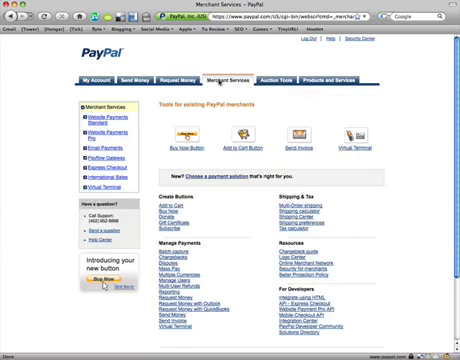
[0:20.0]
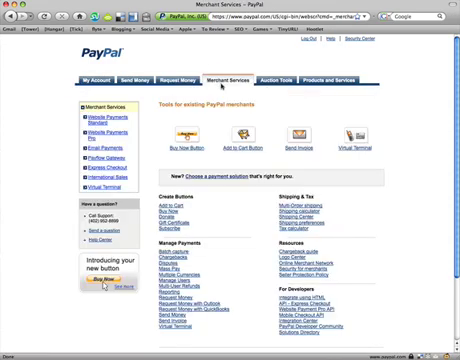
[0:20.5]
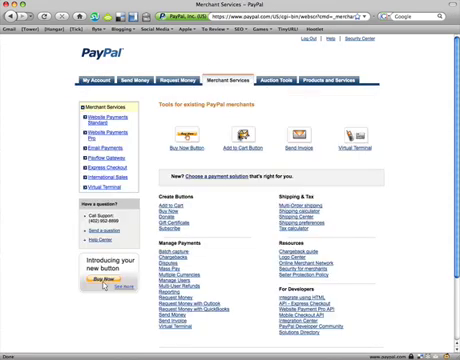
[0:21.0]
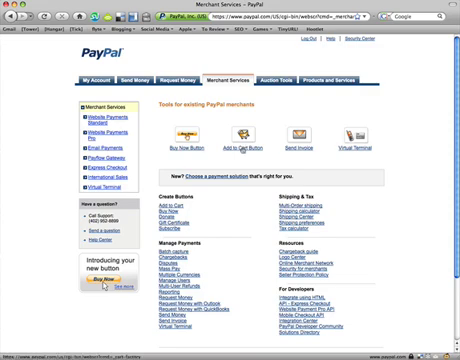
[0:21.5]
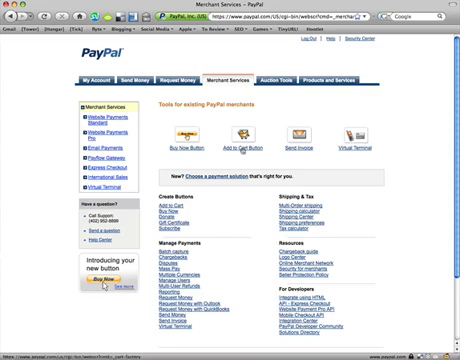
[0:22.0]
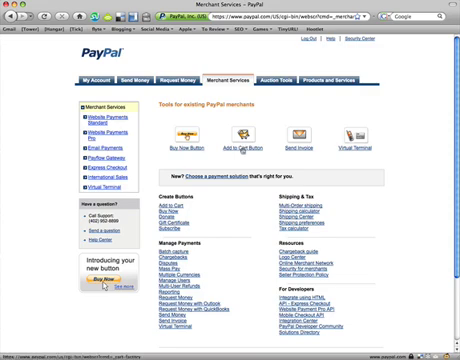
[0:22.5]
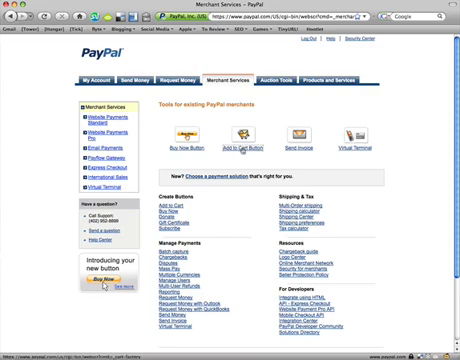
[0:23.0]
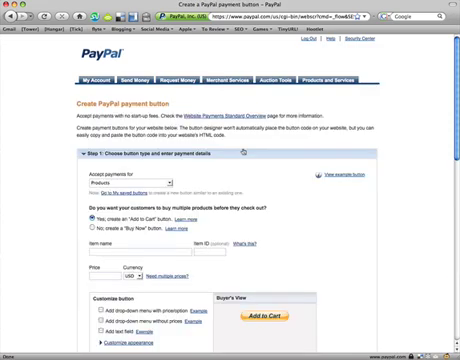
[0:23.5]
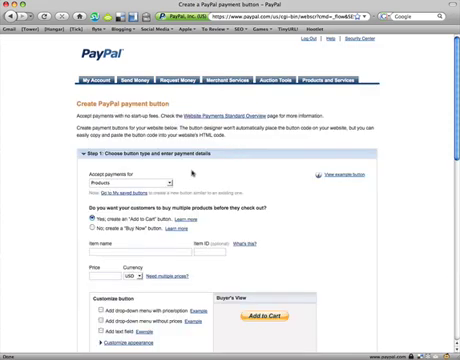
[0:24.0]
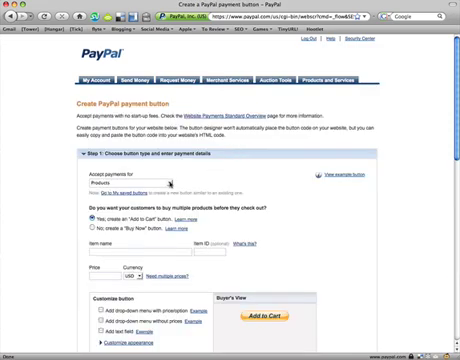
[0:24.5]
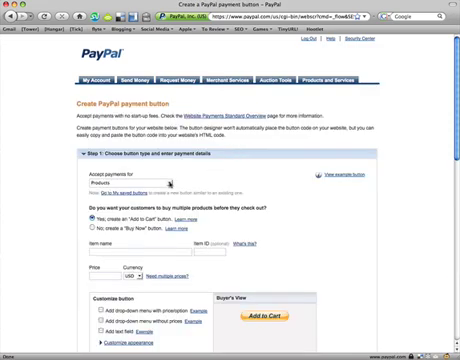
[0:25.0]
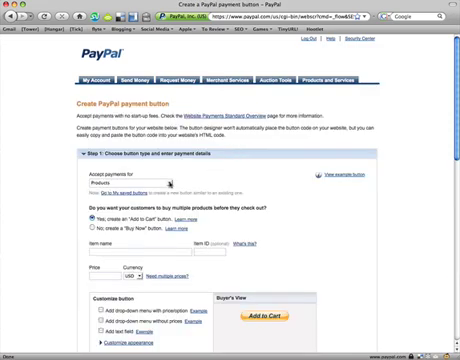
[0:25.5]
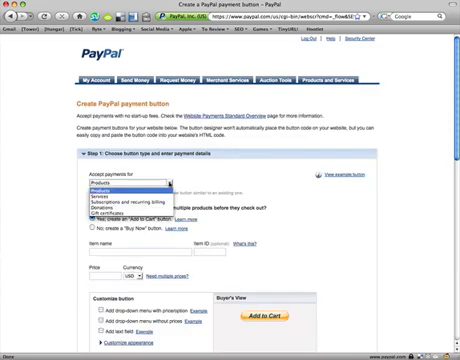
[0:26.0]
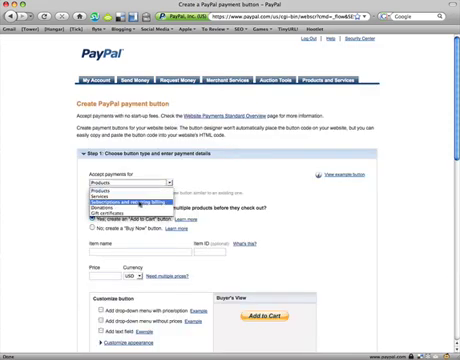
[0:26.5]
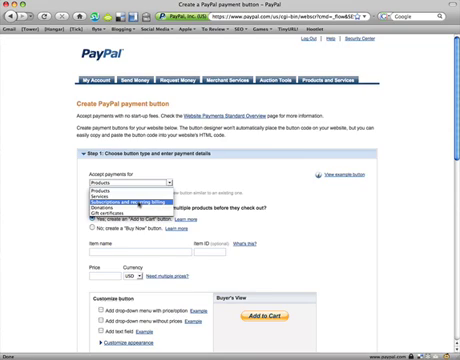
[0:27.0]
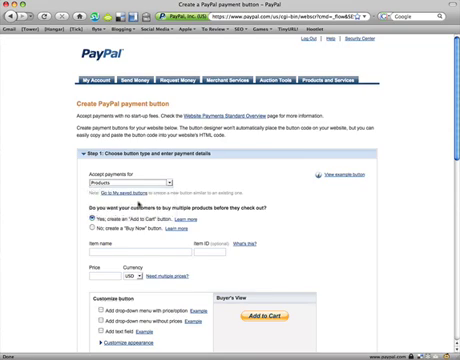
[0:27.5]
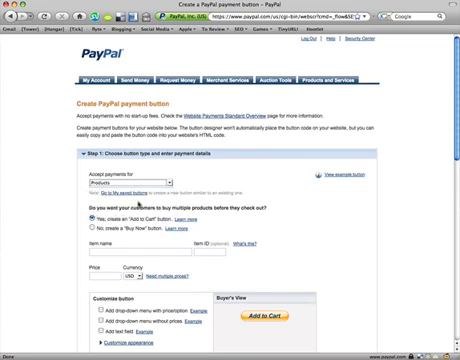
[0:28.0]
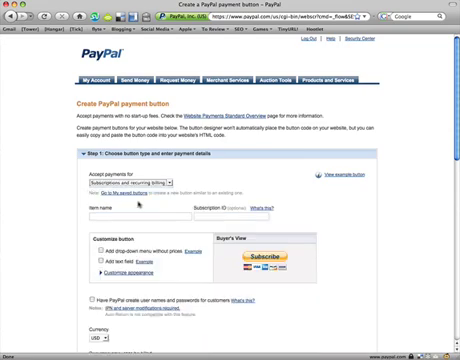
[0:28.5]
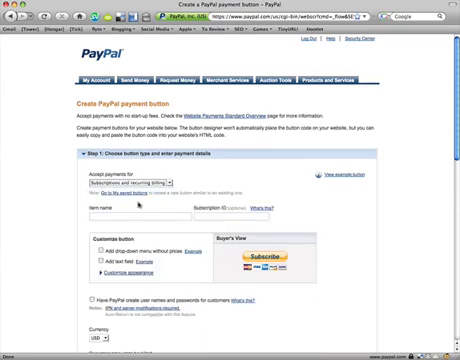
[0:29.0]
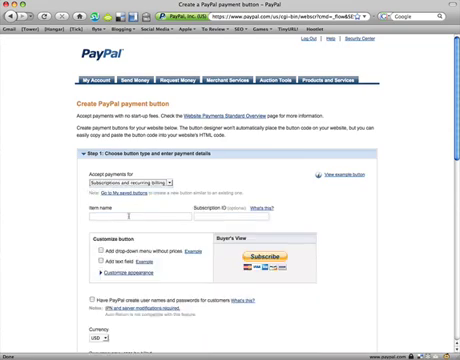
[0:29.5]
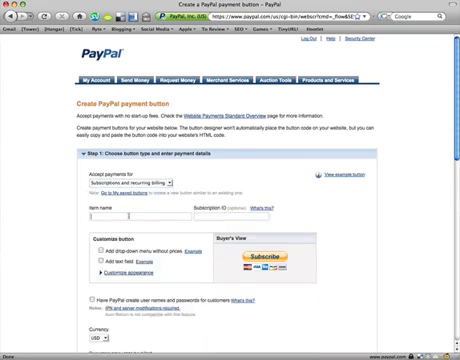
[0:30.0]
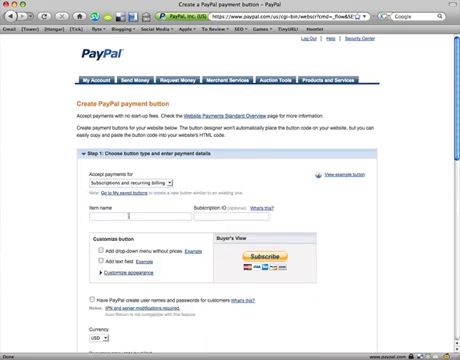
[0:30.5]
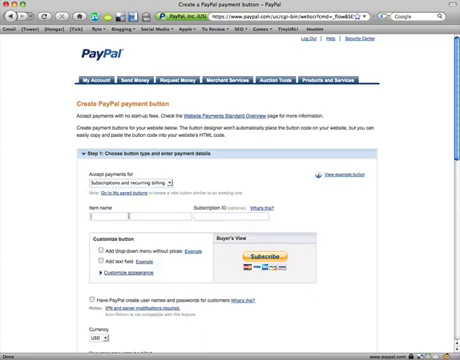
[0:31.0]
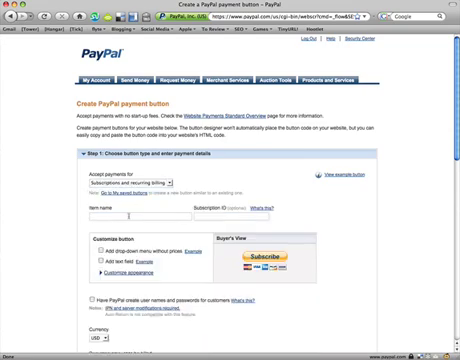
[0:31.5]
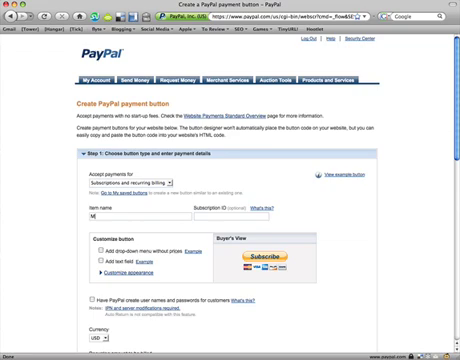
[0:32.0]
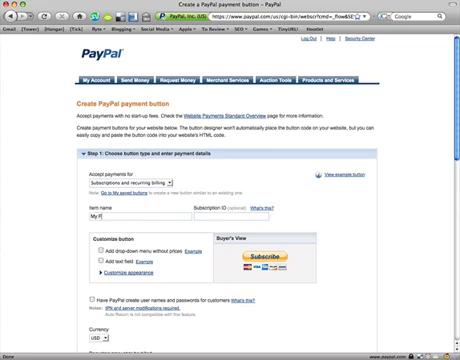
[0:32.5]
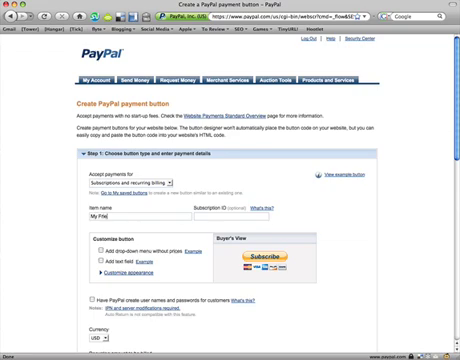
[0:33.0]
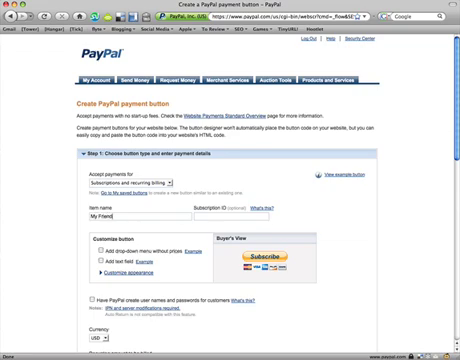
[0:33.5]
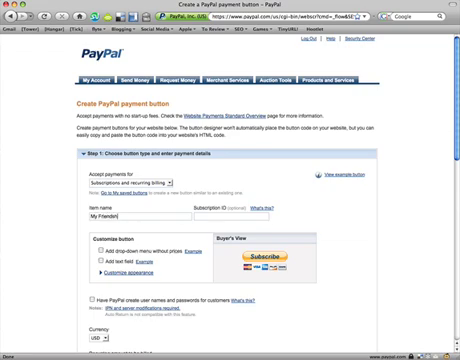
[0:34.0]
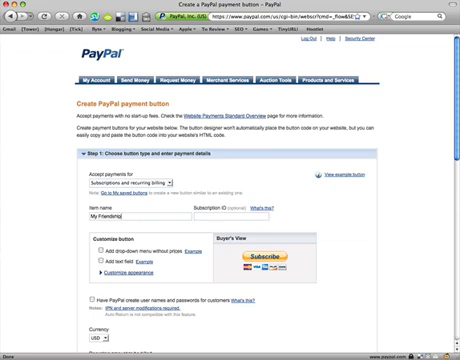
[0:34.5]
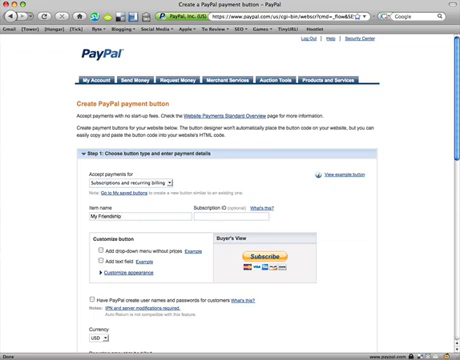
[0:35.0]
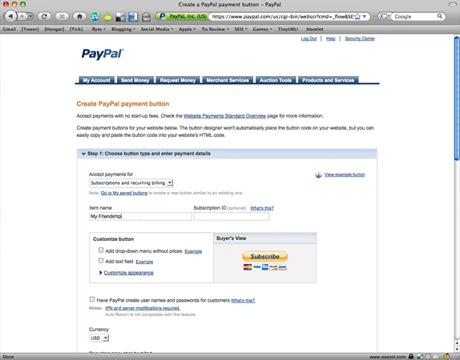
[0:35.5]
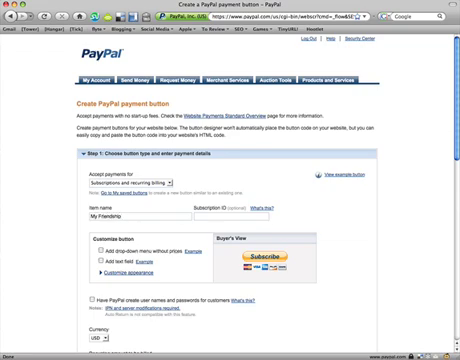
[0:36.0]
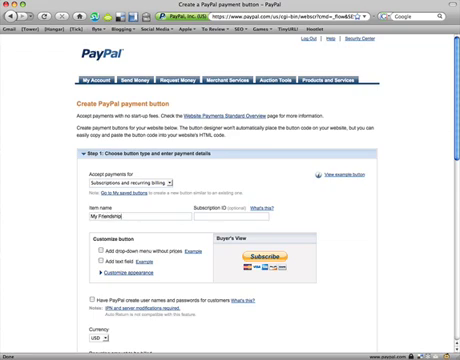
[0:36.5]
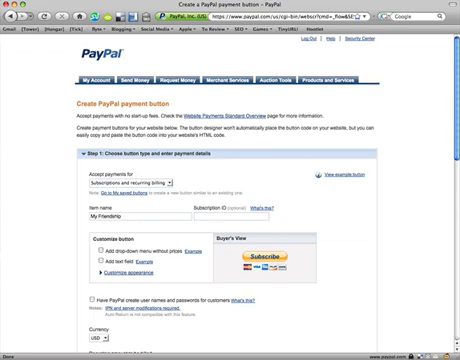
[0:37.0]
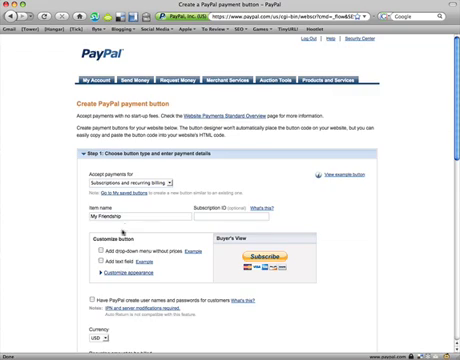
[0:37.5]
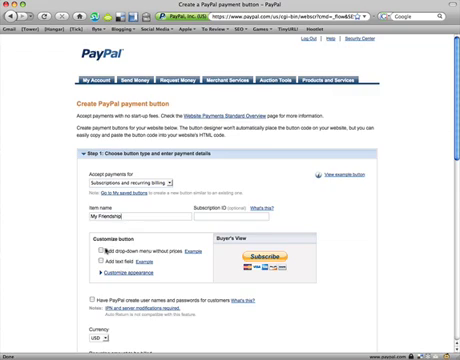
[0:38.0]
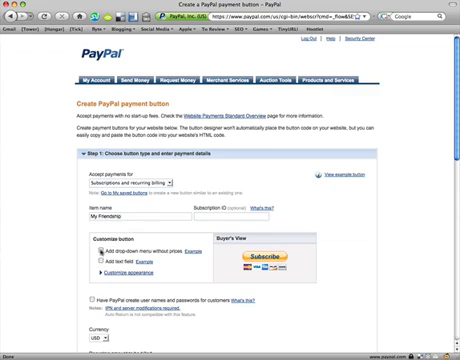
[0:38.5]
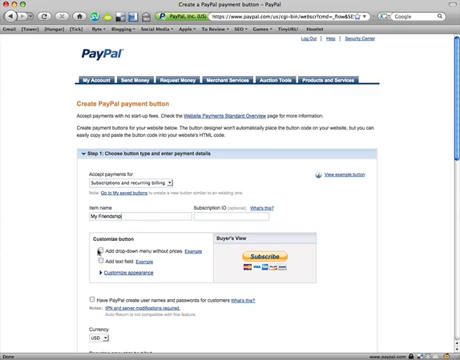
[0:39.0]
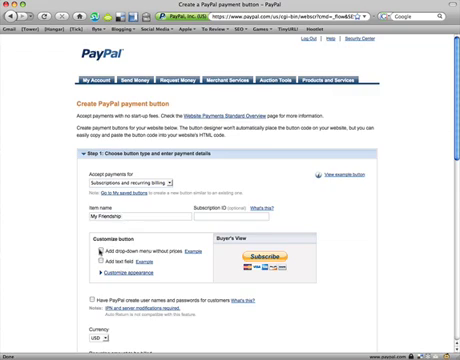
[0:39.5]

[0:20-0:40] The Merchant Services tab opens a new page with new options. Four tools appear, each with an icon in a rectangular box with a white background and, beneath it, a label in blue underlined text. The video creator clicks the second icon from the left, labeled "Add to Cart Button." This brings up a new screen with a drop-down menu containing multiple blanks and forms to fill out. The page title is "Create PayPal Payment Button," and step one is choosing a button type and entering payment details. The user apparently shows how to set up a payment for subscriptions and recurring billing, entering the relevant information in the fields below. It appears to be a tutorial on setting up merchant services for an online business or brand.